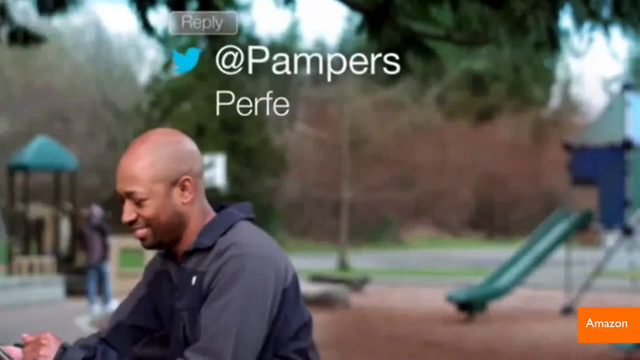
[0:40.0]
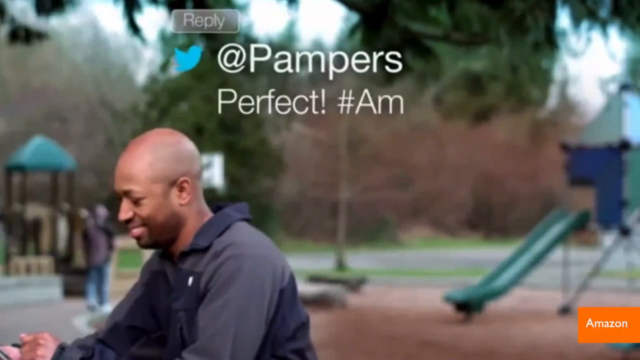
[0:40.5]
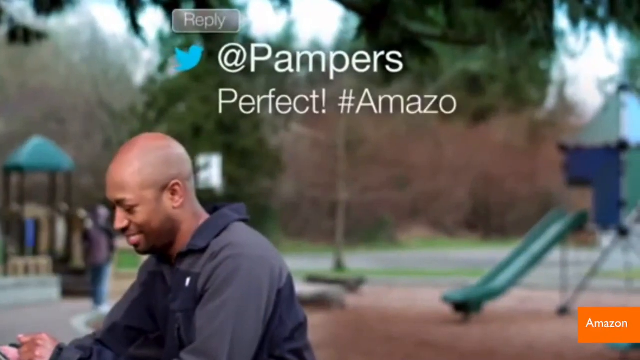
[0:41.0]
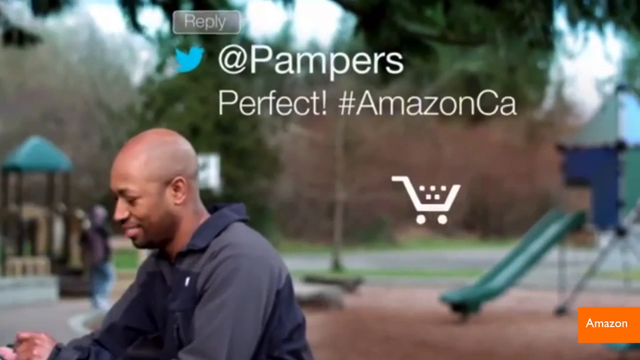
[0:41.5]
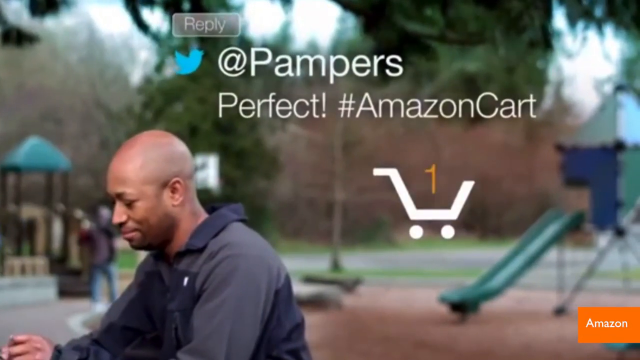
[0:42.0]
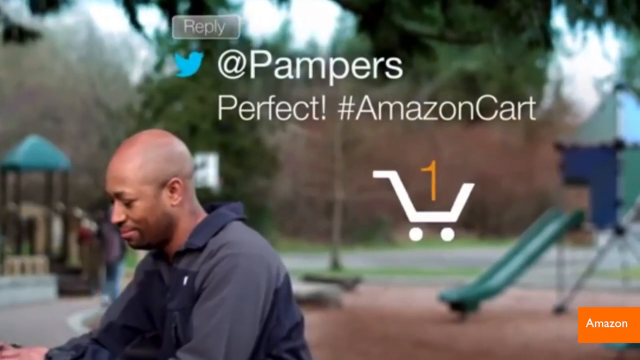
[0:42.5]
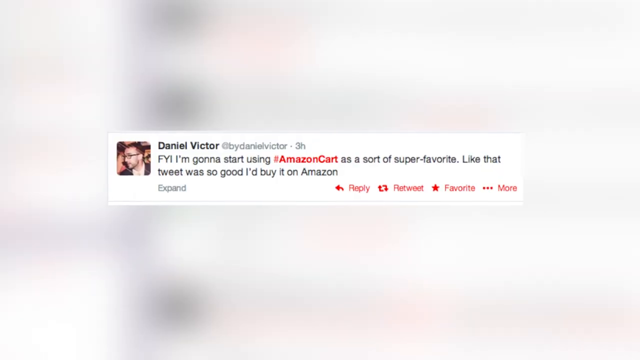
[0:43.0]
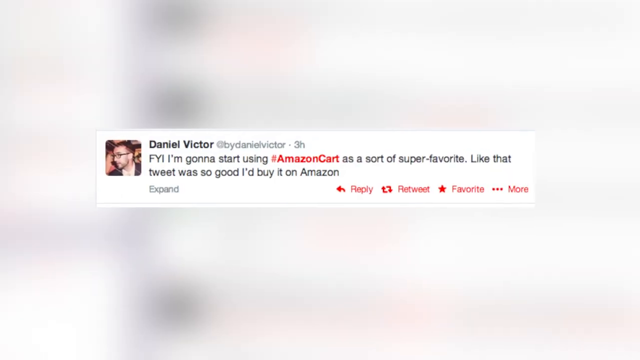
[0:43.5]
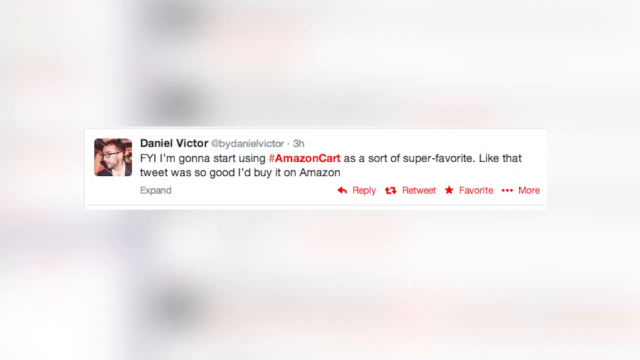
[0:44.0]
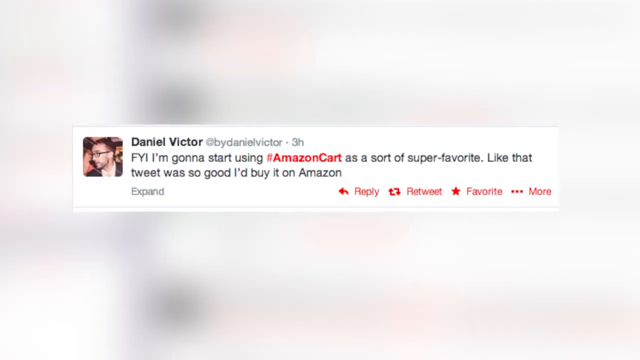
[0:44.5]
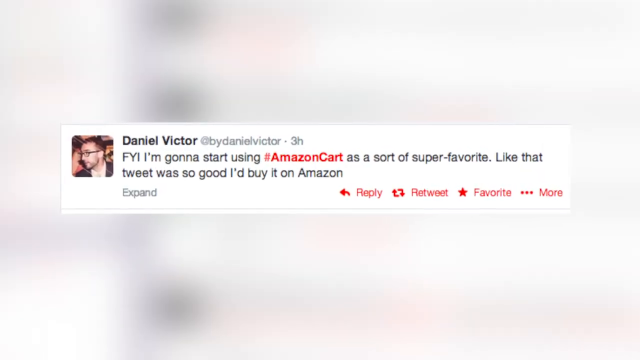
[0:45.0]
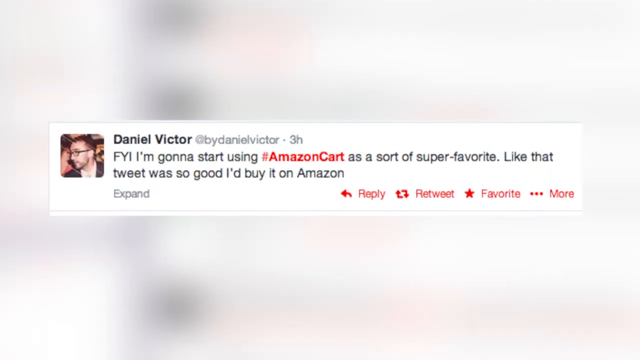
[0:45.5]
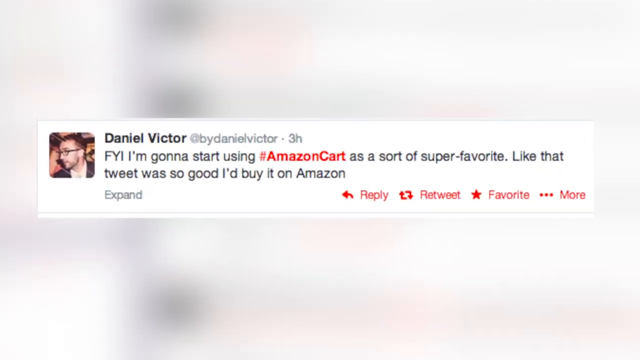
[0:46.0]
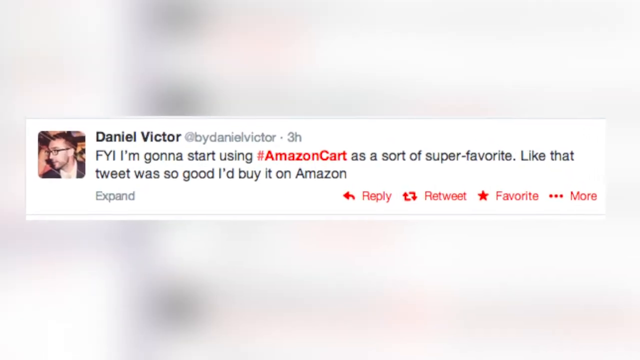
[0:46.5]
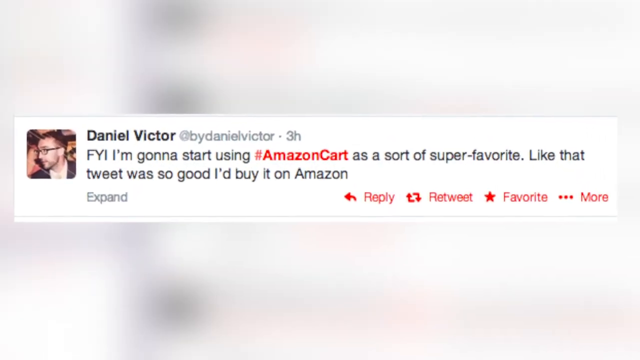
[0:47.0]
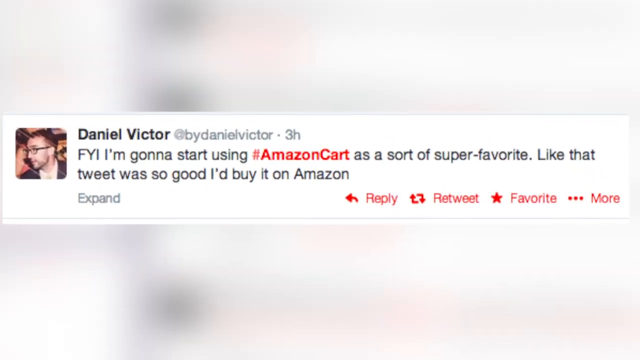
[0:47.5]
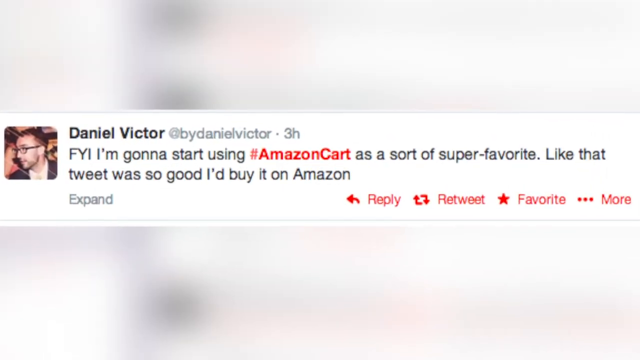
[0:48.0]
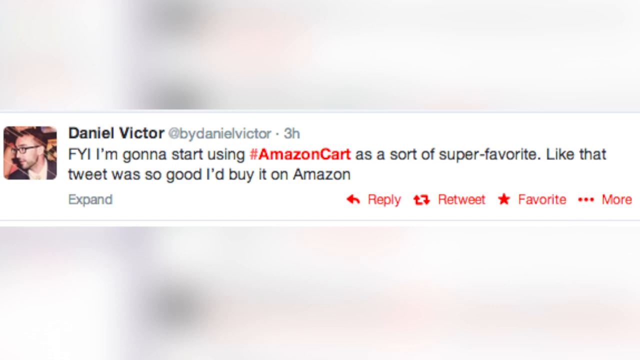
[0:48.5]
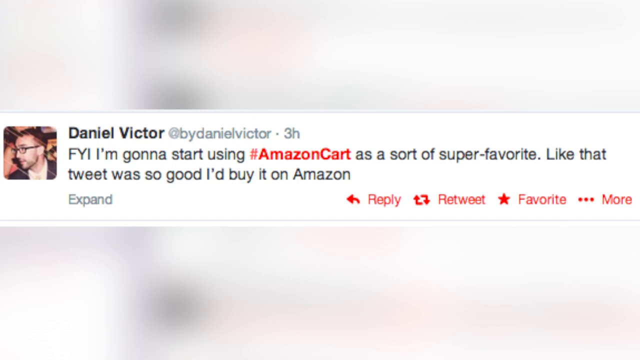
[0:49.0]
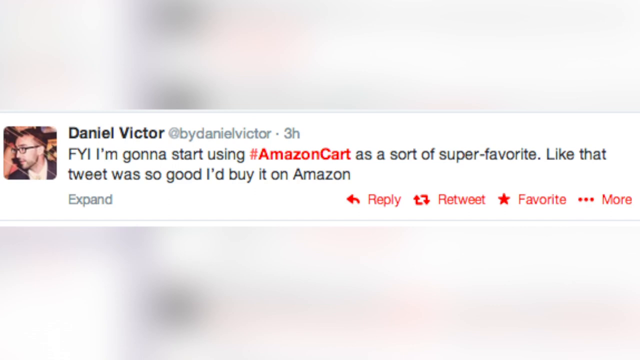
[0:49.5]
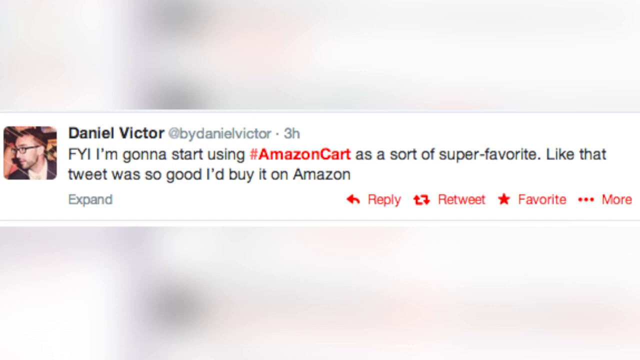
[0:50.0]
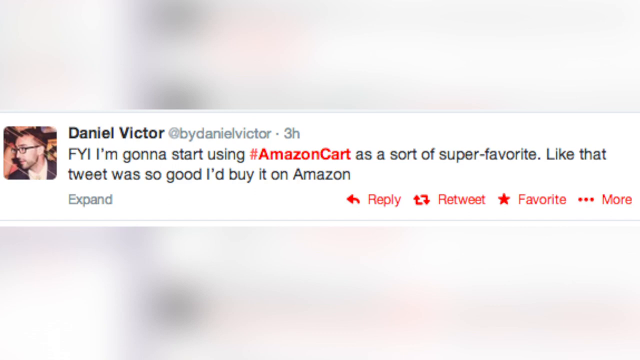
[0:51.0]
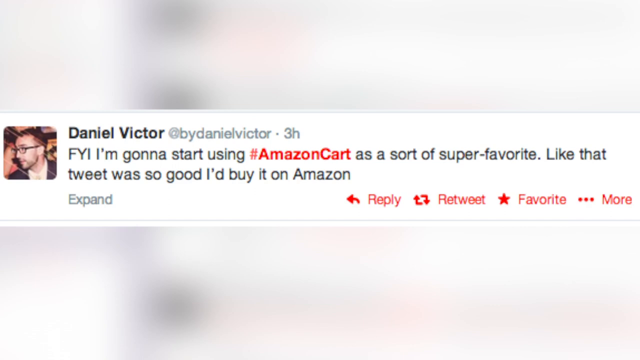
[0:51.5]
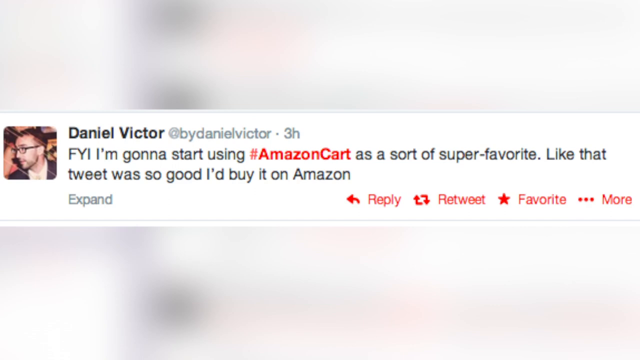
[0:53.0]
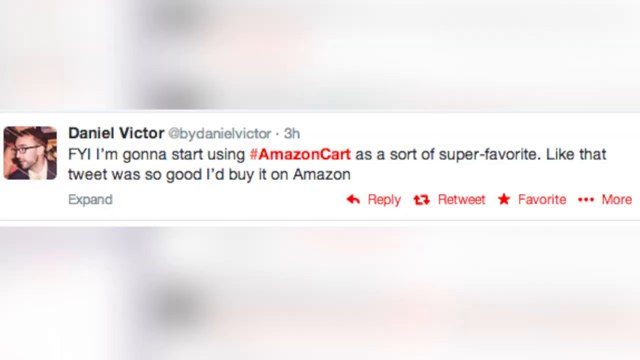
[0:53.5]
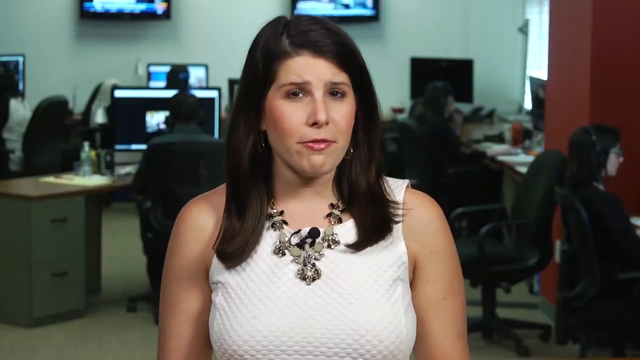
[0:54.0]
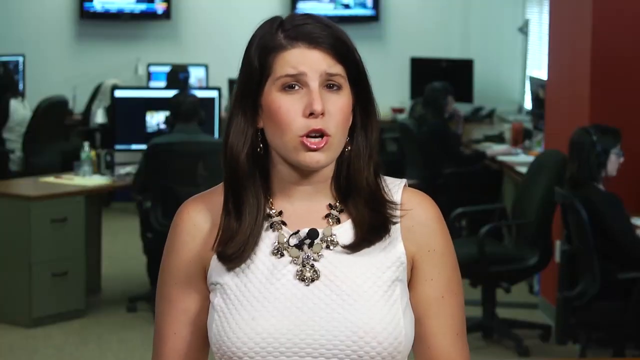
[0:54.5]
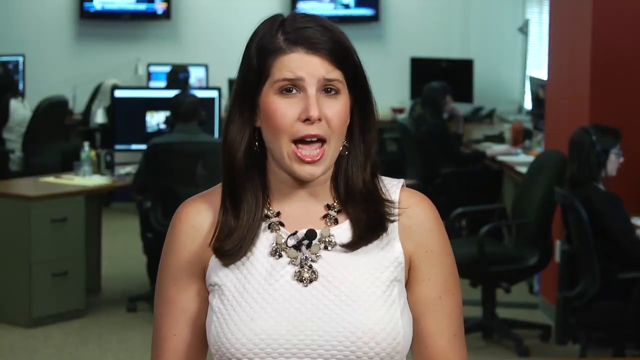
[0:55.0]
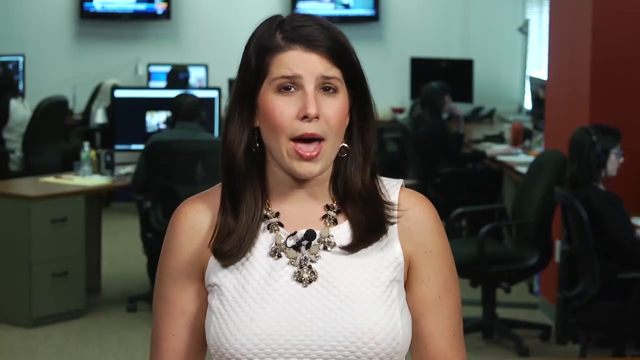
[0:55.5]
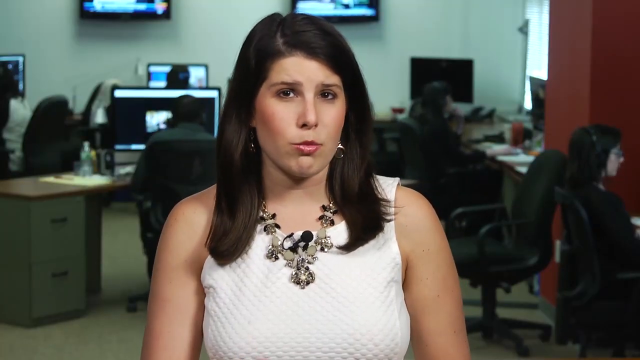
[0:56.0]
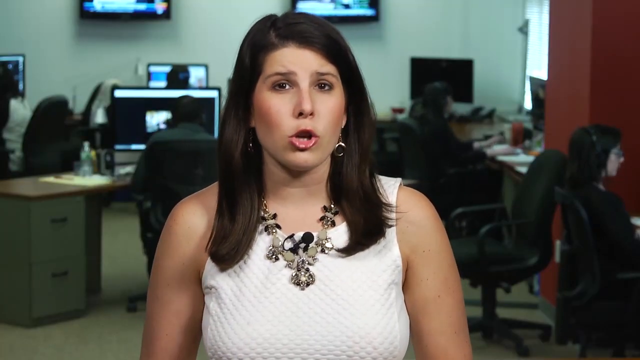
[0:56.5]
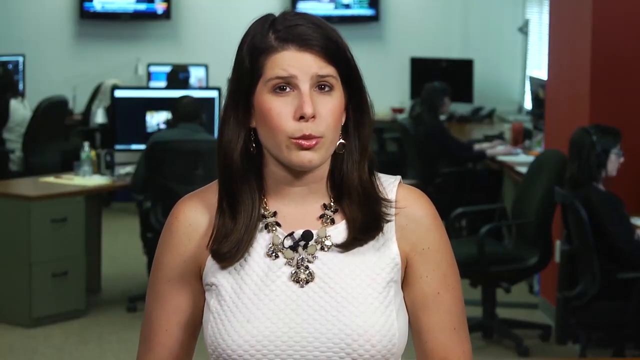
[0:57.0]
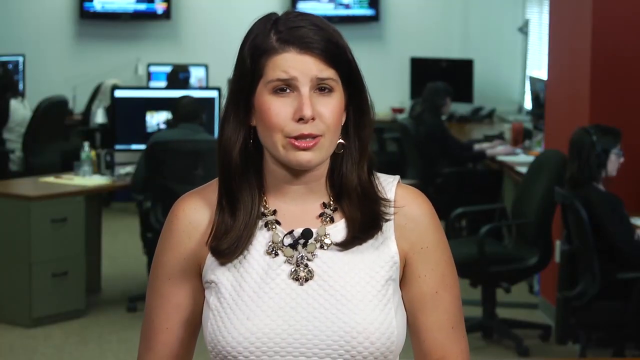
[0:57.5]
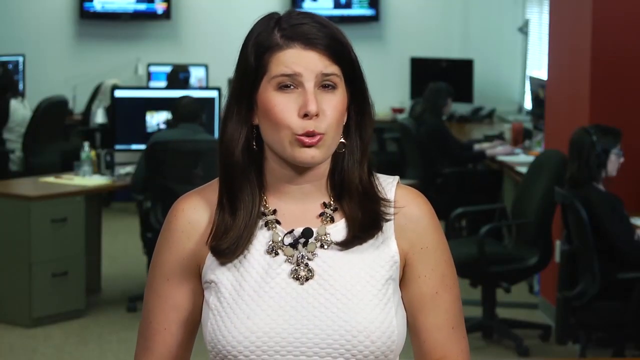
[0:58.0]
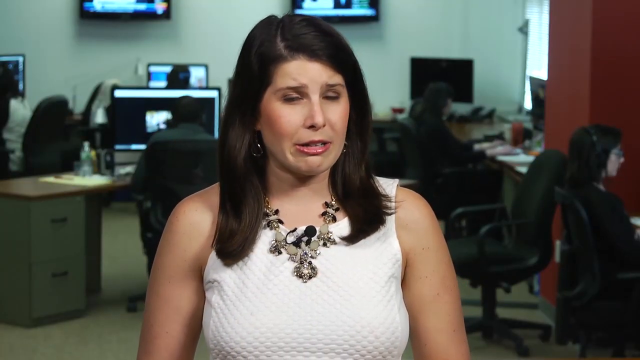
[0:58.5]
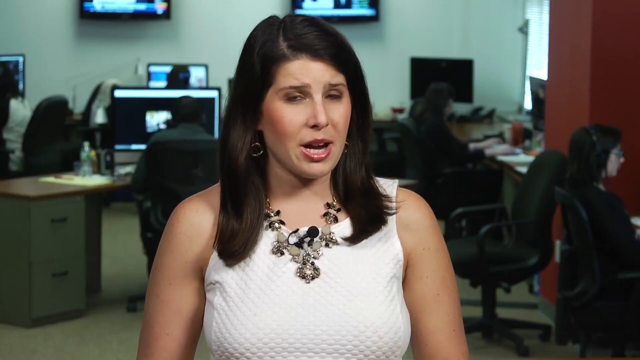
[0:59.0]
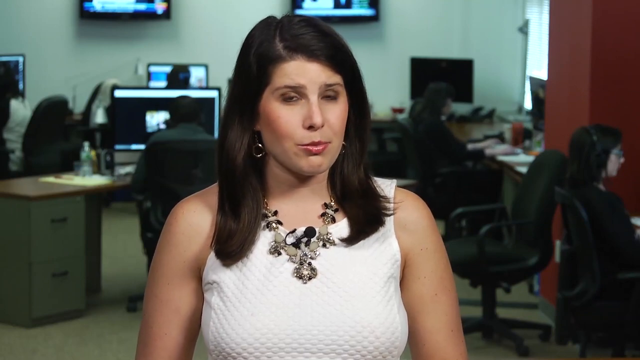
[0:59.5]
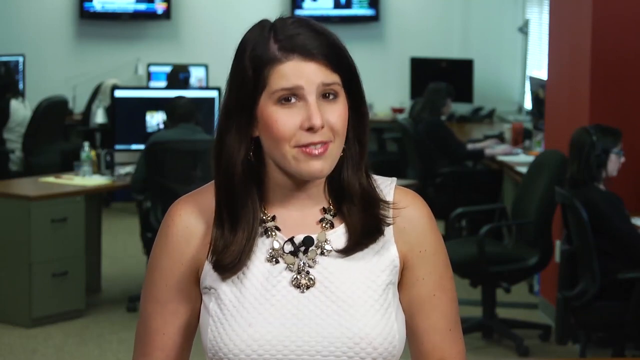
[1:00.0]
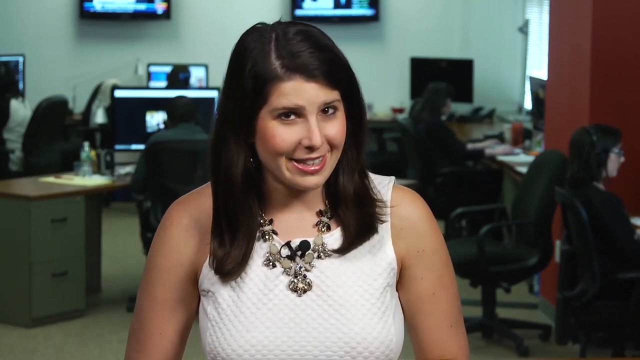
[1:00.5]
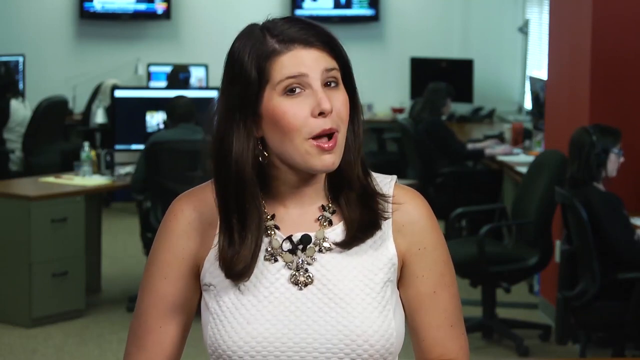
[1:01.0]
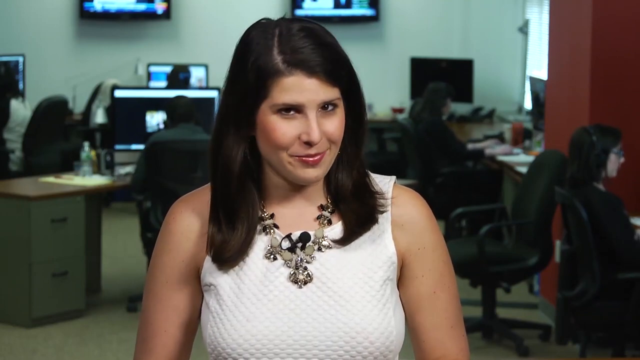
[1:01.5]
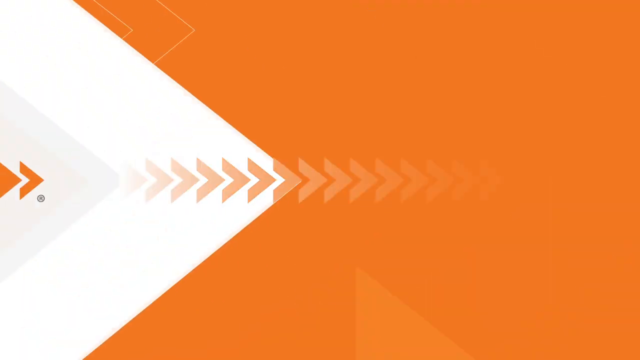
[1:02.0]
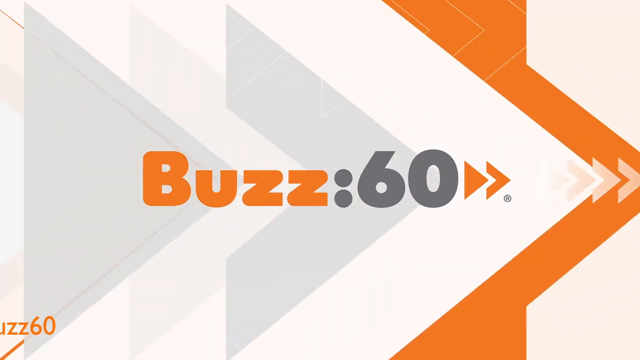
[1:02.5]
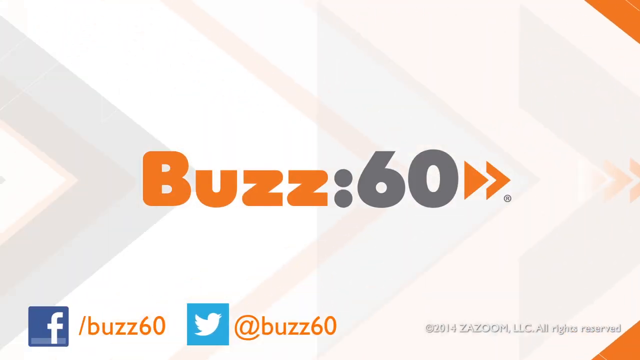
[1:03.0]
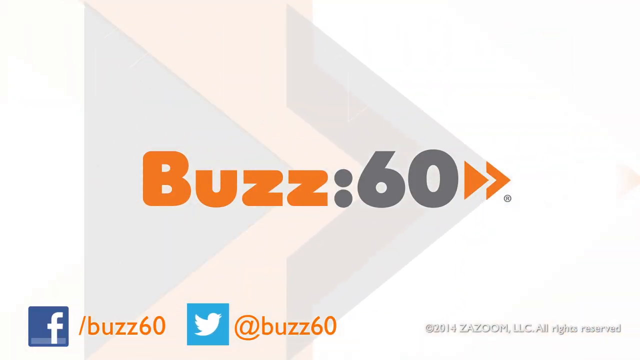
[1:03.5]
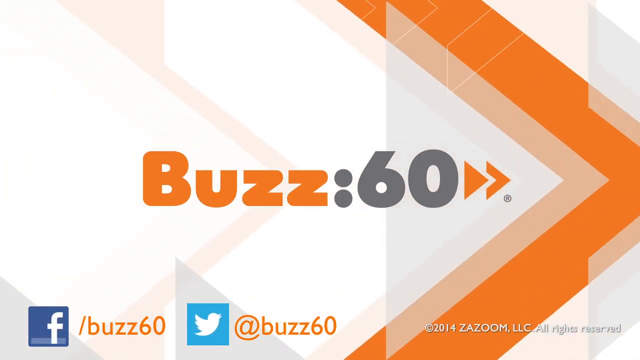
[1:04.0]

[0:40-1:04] The African-American man, middle-aged, sits on a park bench and writes on Twitter, now X, "at Pampers perfect Amazon cart one." He is smiling and happy. Then a post from Daniel Victor reads "FYI, I'm gonna start using Amazon cart as a sort of super favor. Like that tweet was so good, I'll buy it on Amazon." The post gets bigger and the view pans through it, pausing so it can be read. The news reporter appears again, talking, explaining something and smiling. Then it cuts to Buzz 60: big orange letters "Buzz" with the "60," along with the handles for their Twitter/X and Facebook.